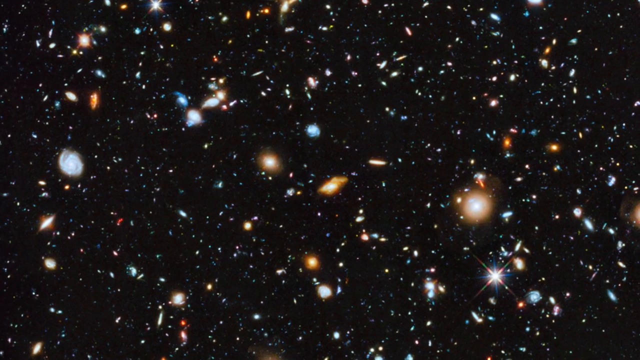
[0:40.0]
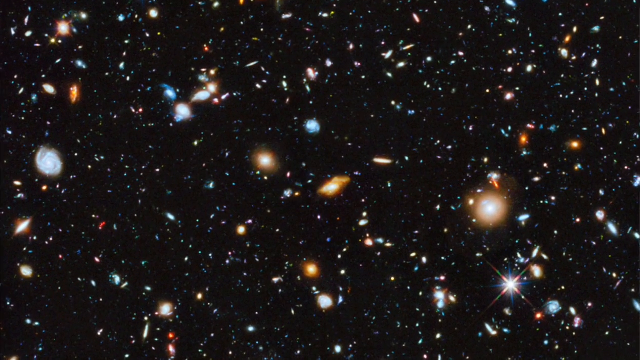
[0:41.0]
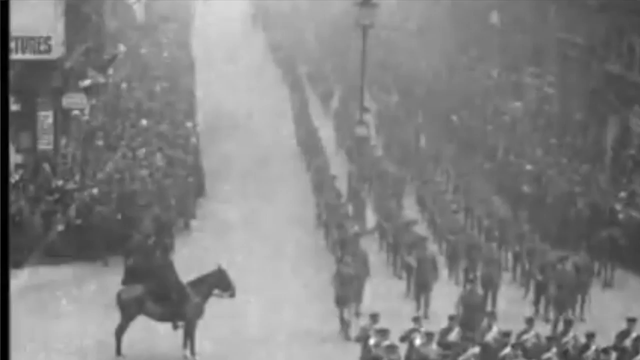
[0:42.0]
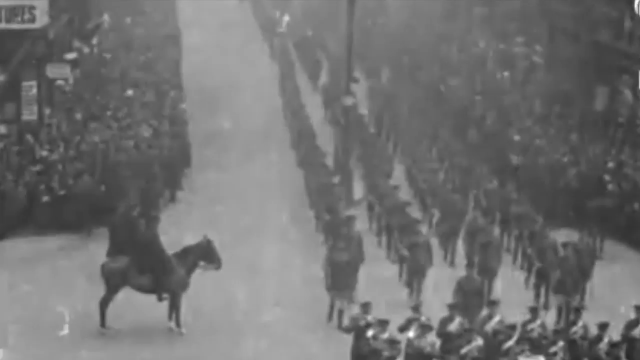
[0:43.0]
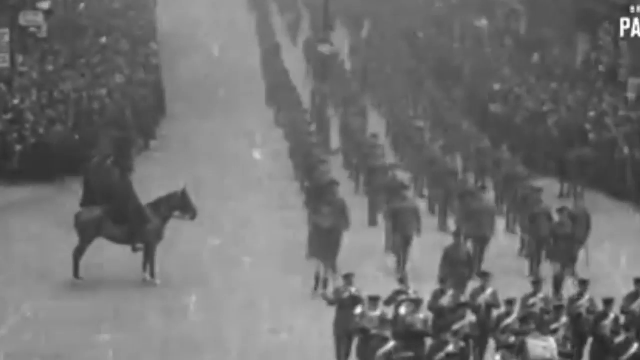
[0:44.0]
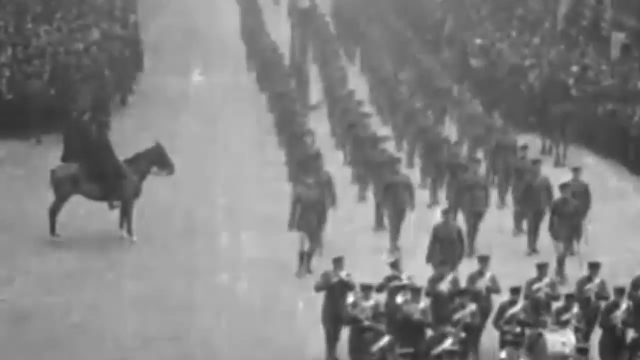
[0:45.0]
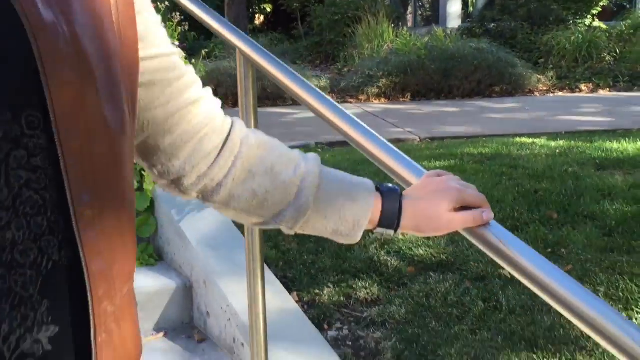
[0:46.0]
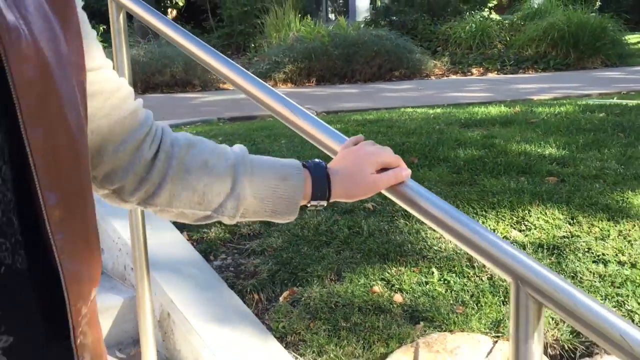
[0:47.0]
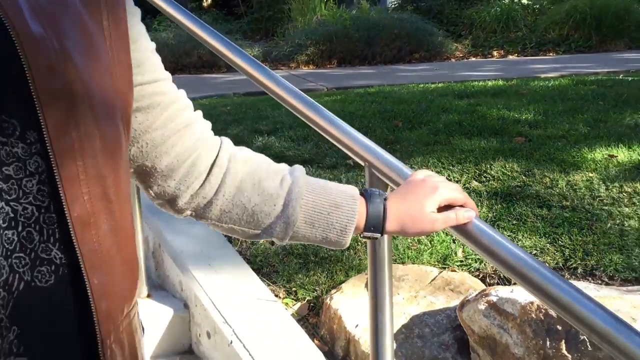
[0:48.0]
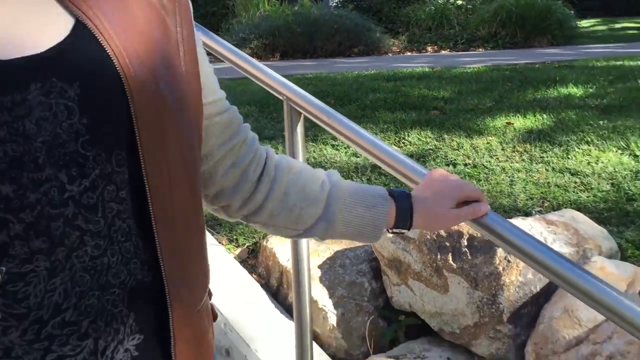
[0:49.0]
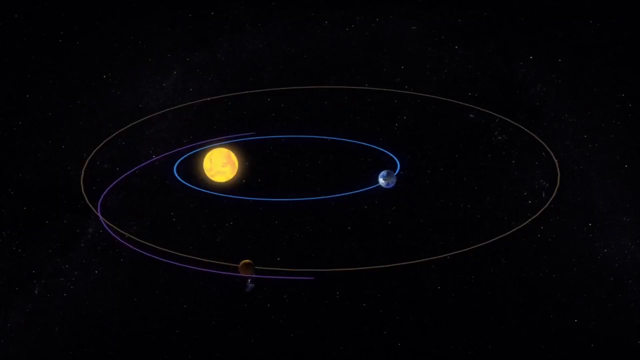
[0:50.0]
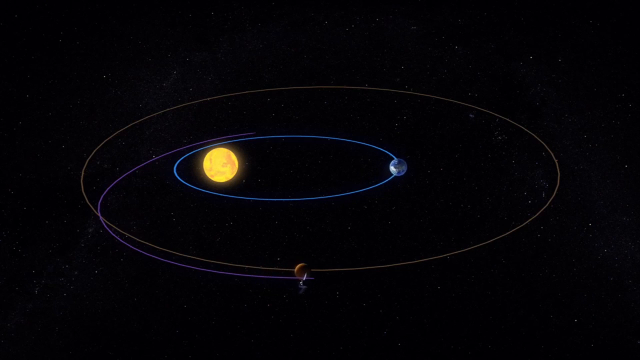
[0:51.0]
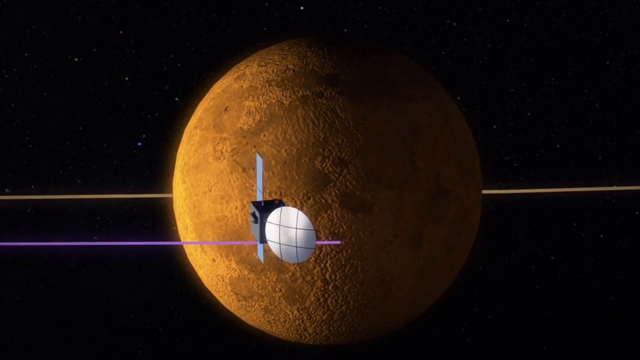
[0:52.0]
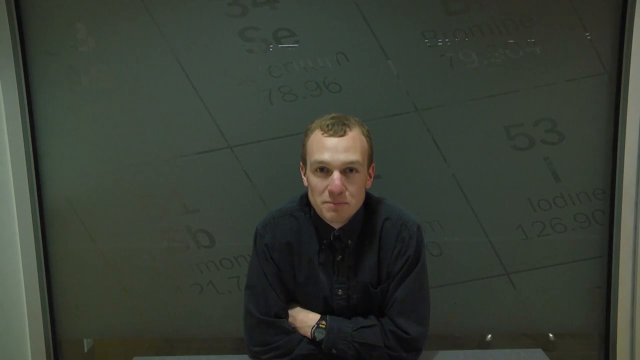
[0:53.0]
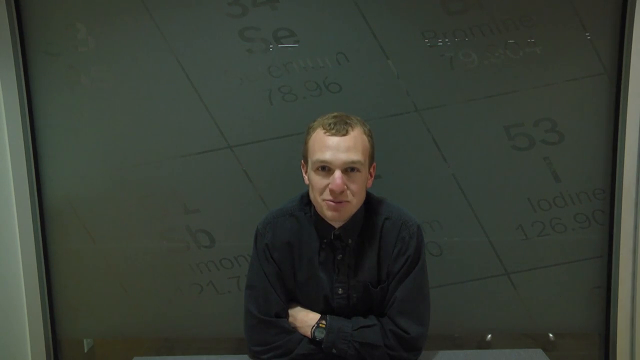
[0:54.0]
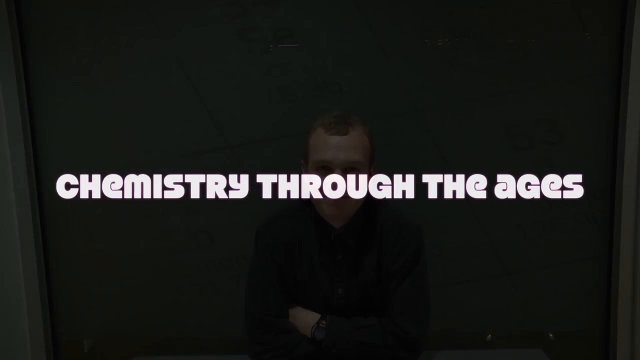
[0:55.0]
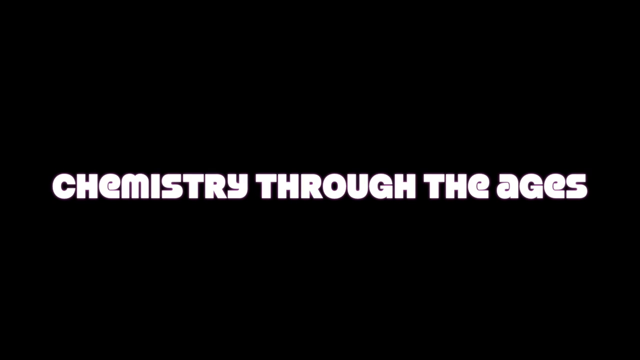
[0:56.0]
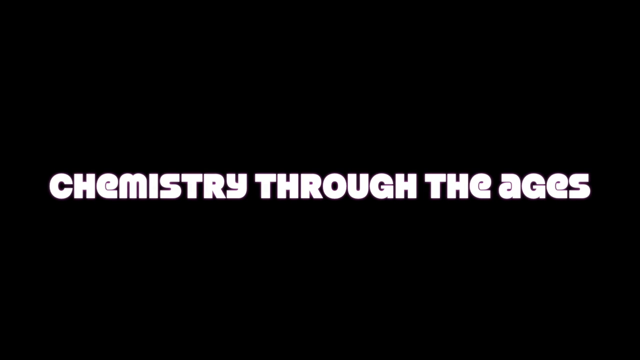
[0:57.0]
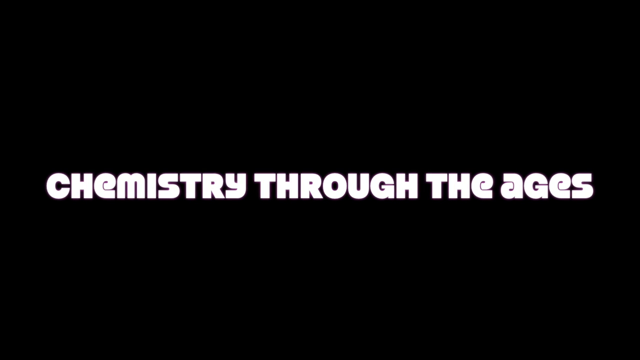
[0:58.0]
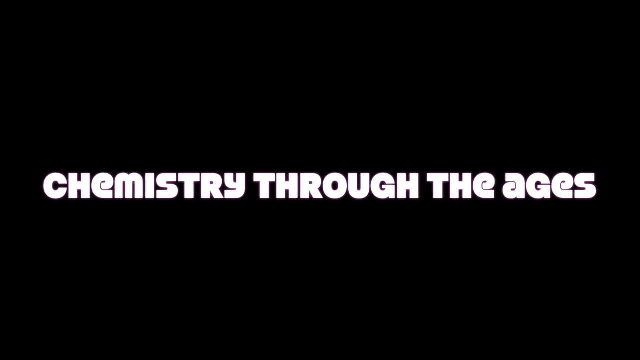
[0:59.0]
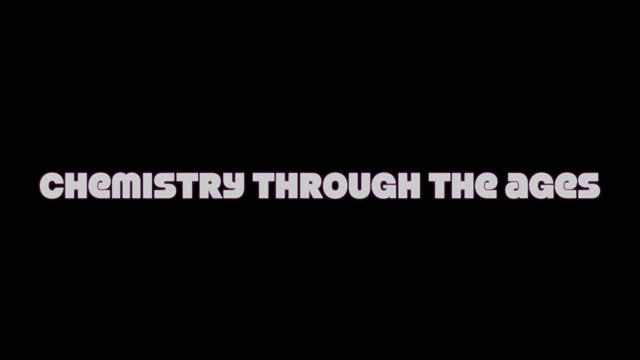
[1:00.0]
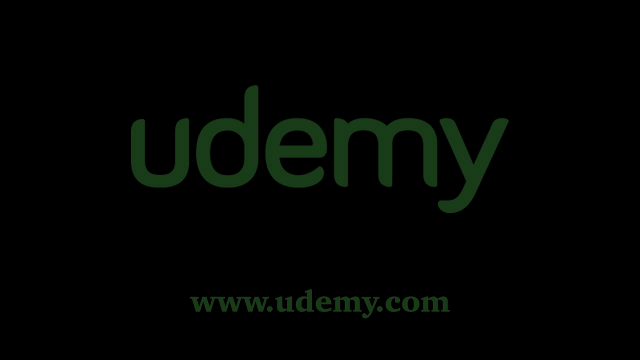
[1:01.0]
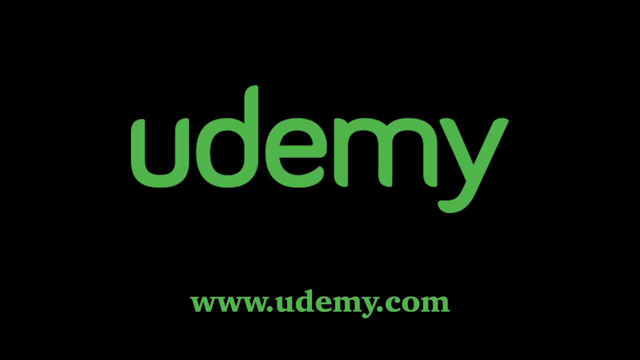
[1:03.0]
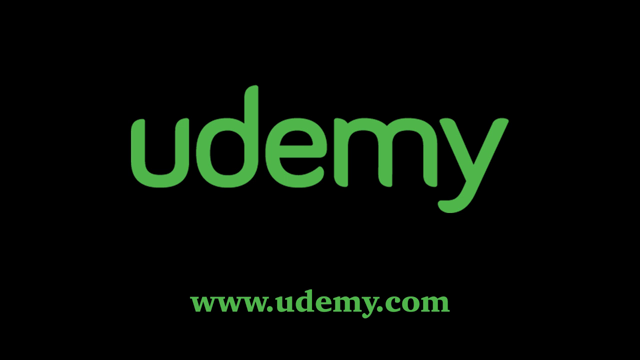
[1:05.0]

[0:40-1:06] The video opens on kind of a solar system in the background, with all kinds of stars, maybe some planets, and glowing circles in colors like teal and yellow; some of them look like shiny balls. As the view zooms in, soldiers are seen marching in the snow in what looks like a very old clip. A woman then walks with her hand on a handrail. Next, artistically drawn planets move in the background. A man talks very briefly before the video cuts to an all-black page with the words "chemistry through the ages" in white capital letters. Then "Udemy" appears in green, all-lowercase letters in the middle, with "www.udemy.com" at the bottom. Finally the screen goes blank.